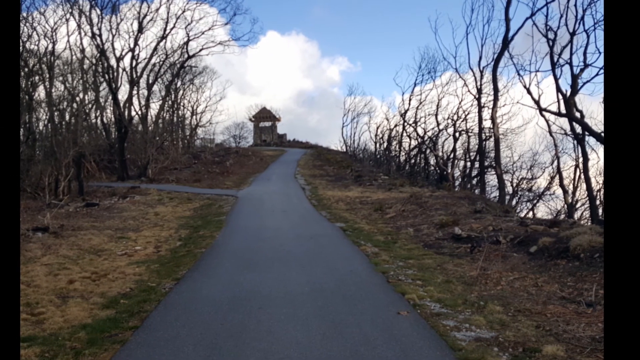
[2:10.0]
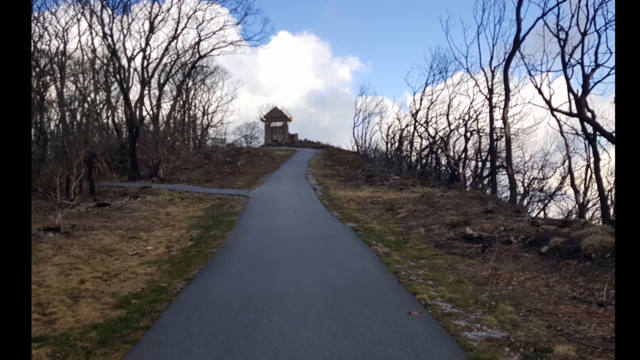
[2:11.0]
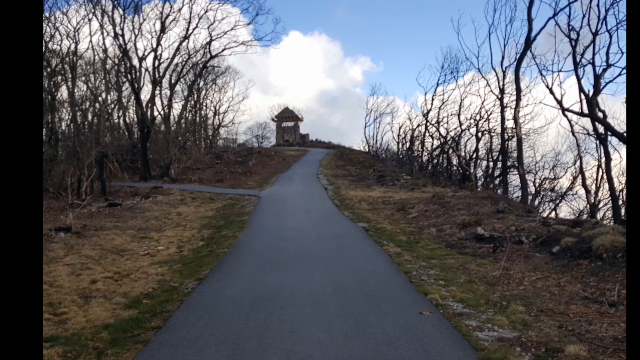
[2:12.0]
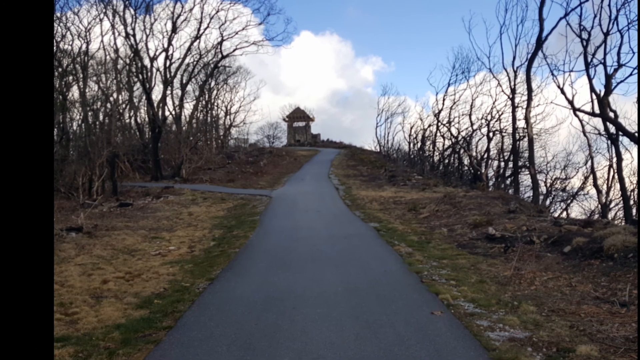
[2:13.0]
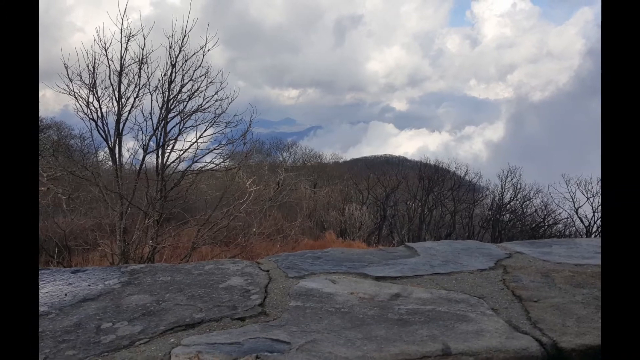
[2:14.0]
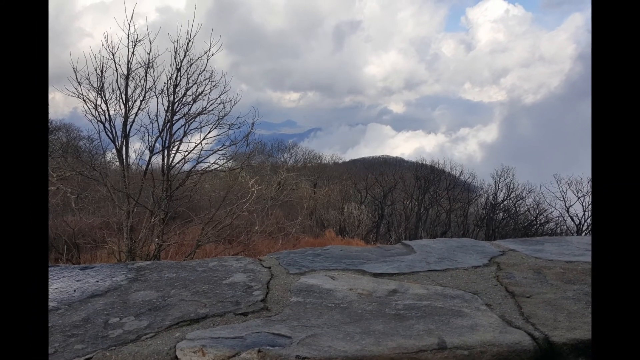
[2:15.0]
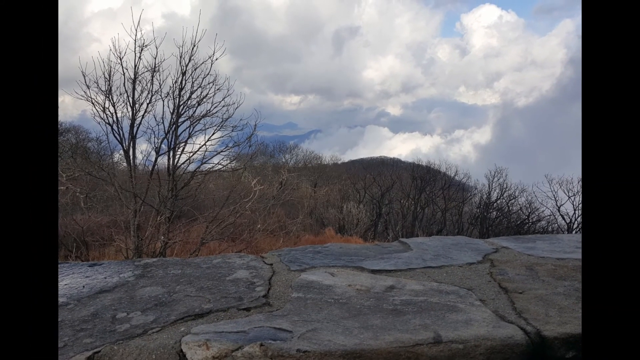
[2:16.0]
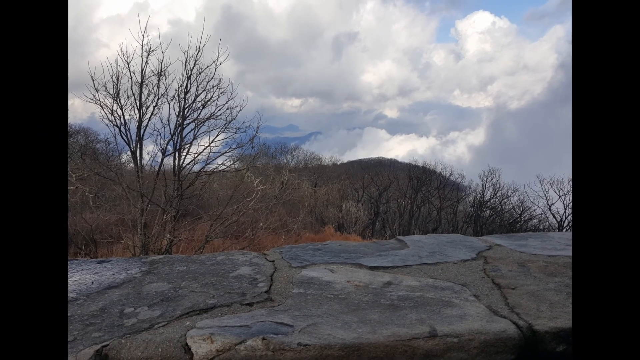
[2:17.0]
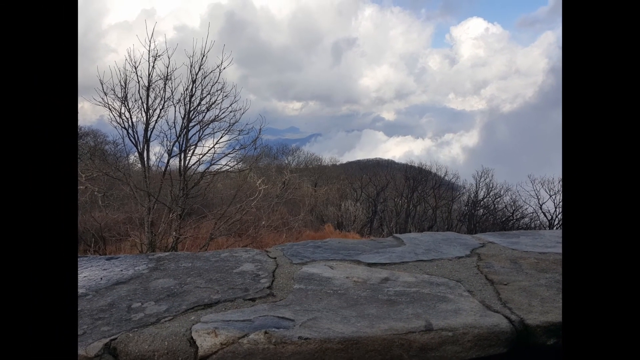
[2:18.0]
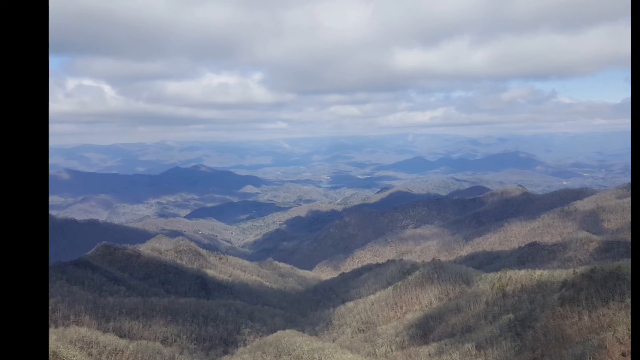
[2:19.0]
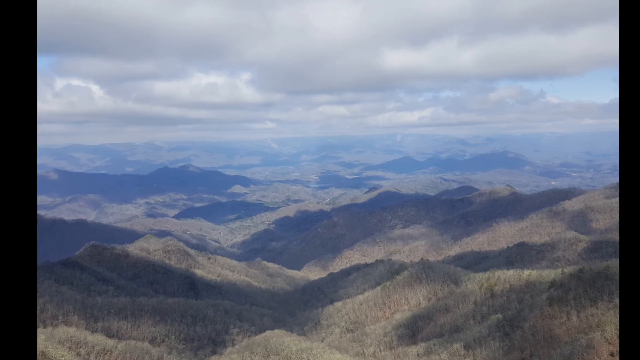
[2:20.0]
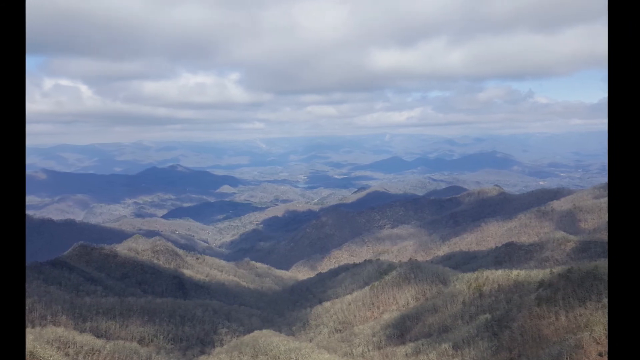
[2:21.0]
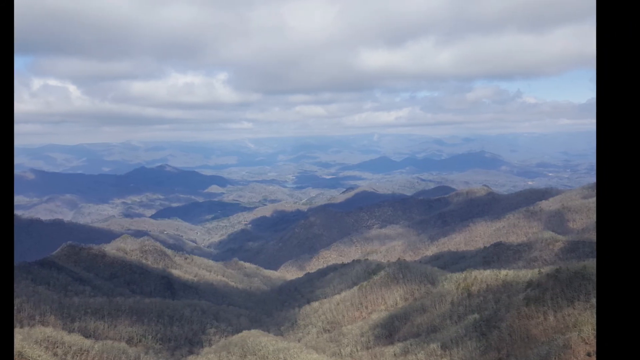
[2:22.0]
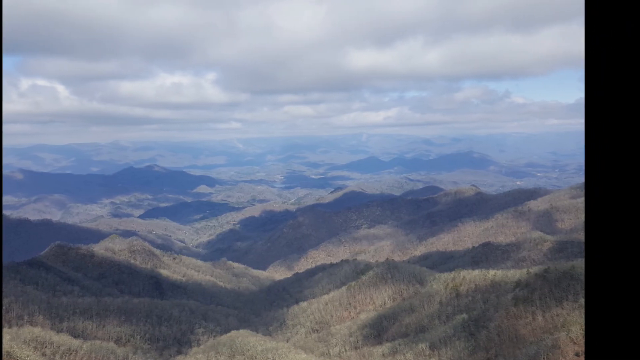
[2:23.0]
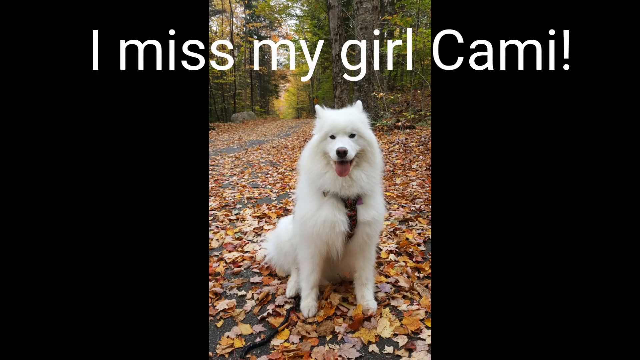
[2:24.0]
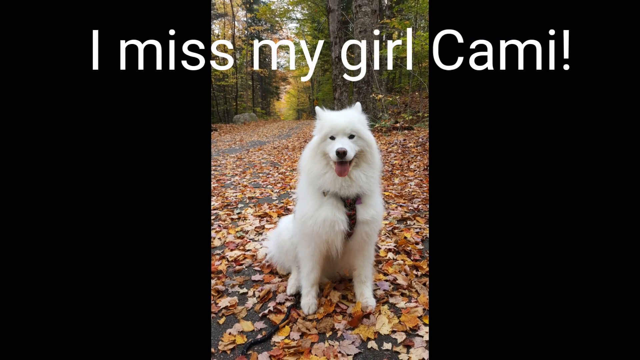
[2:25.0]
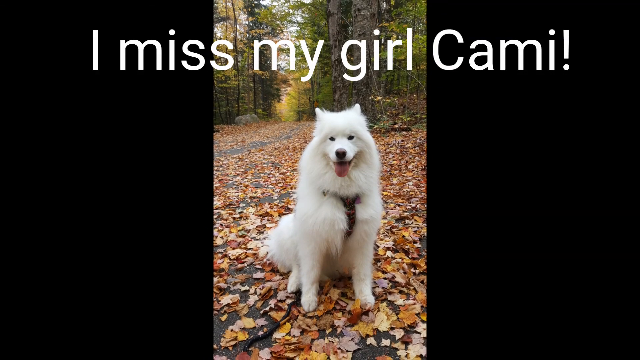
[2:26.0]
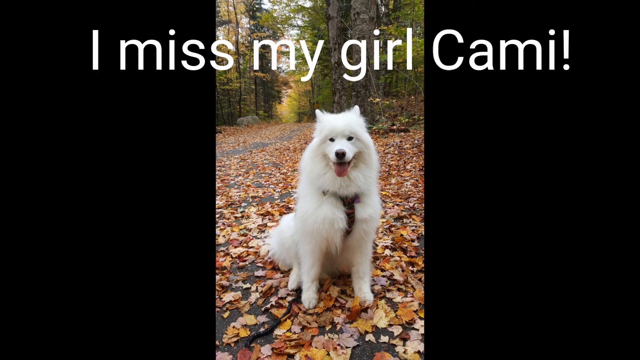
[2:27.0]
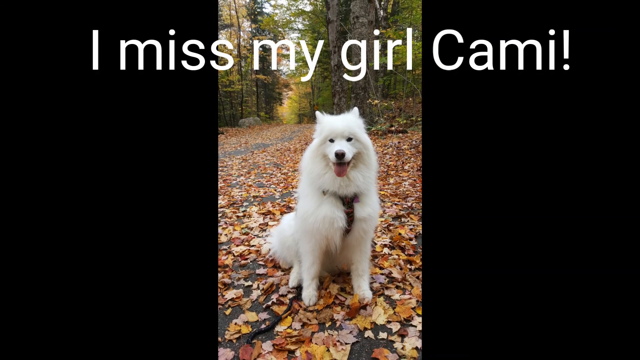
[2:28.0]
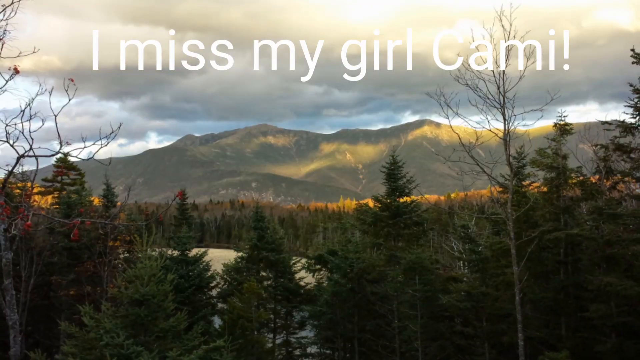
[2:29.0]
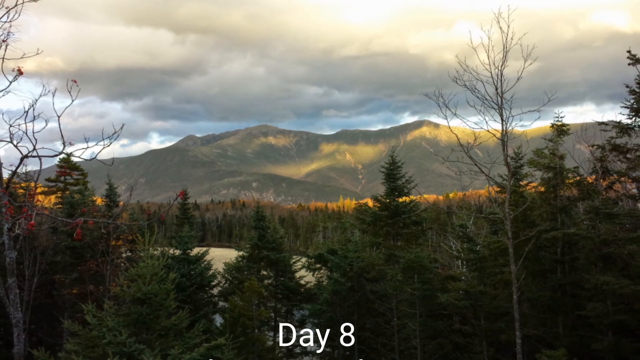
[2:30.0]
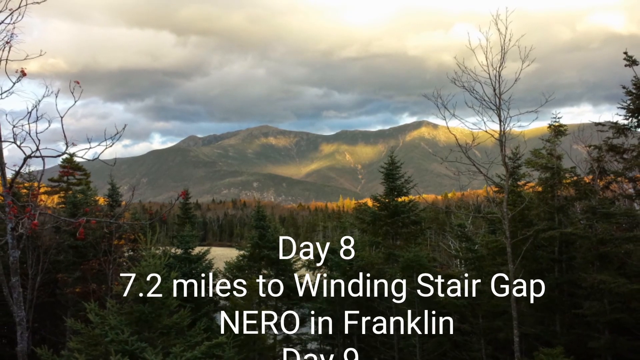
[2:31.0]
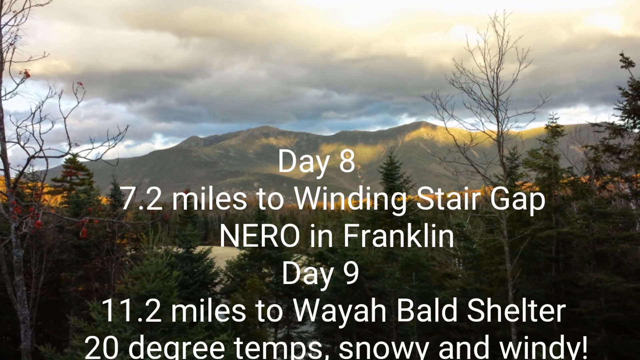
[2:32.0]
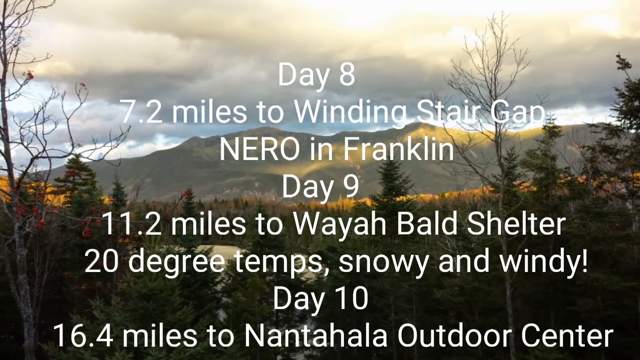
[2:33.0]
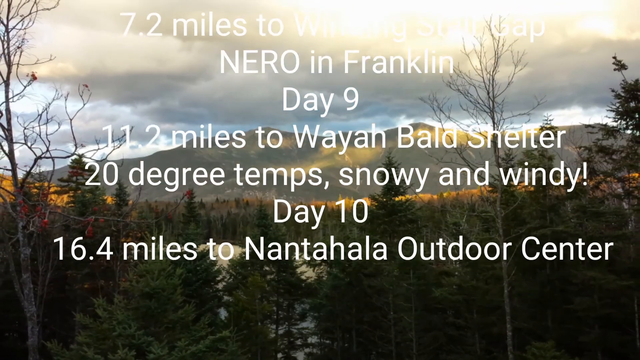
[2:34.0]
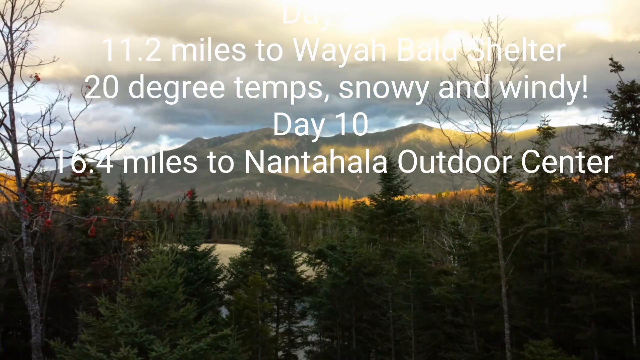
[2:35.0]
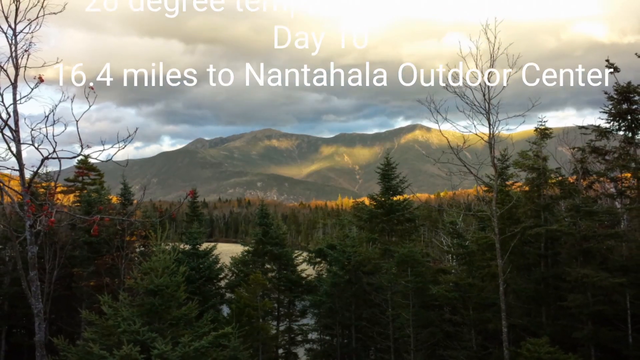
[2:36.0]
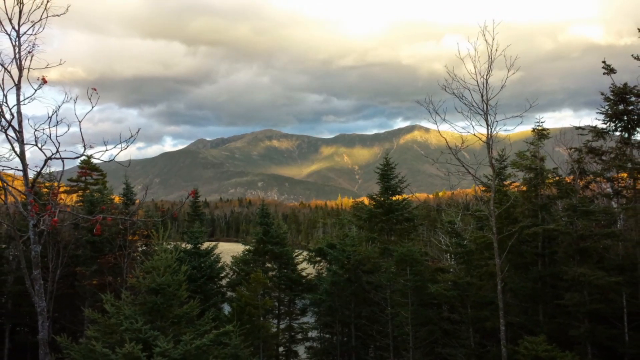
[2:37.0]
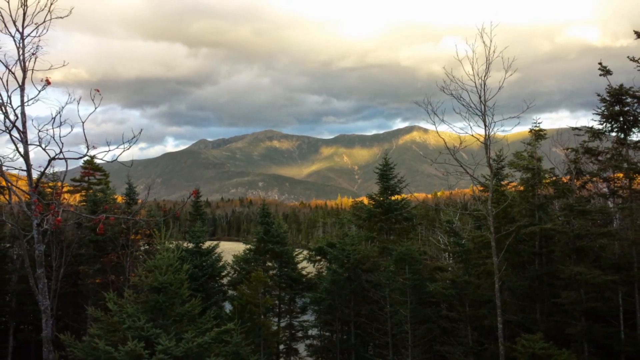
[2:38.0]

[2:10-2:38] A tower or structure of some kind appears, and the view then looks out from the top of that rock structure. More views of the valley follow. At the end, the person indicates that he misses his girl, Cammie, his white dog. A recap of the hike follows: on day eight they went to Winding Stair Gap in Franklin, North Carolina; on day nine, 11 miles to Wya Bold Shelter, in 20 degree temperatures, snowy and windy; and on day 10, 16 miles to Nantahala Outdoor Center.